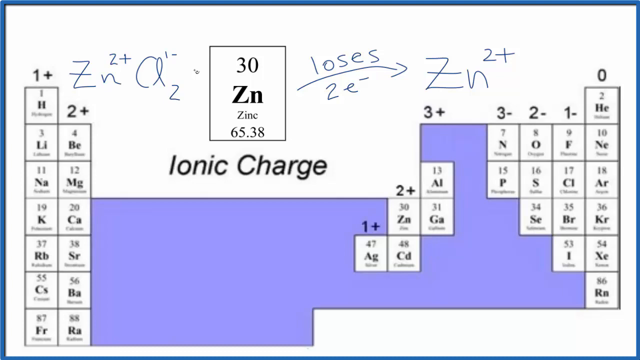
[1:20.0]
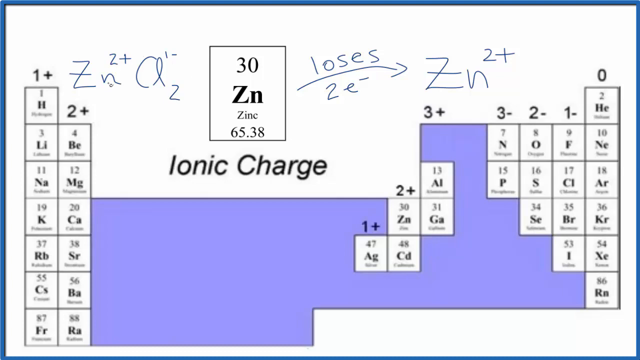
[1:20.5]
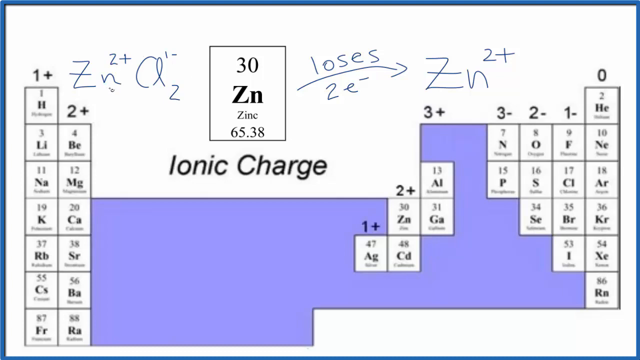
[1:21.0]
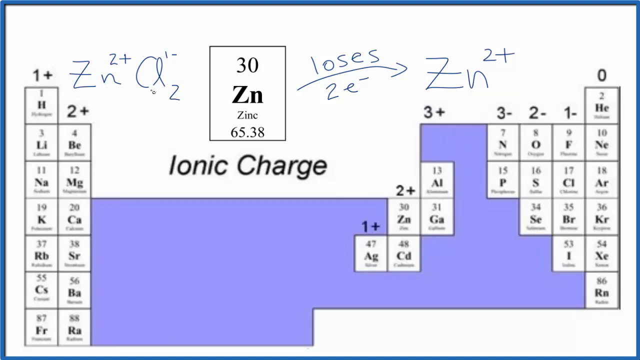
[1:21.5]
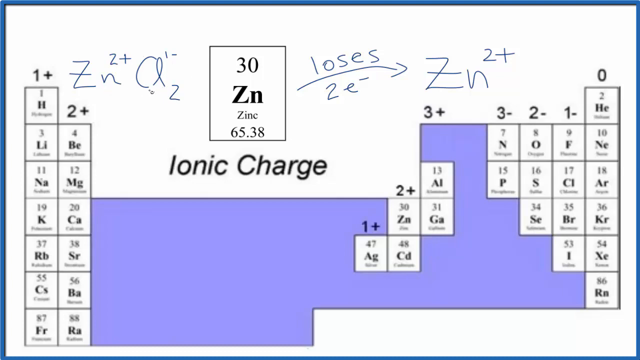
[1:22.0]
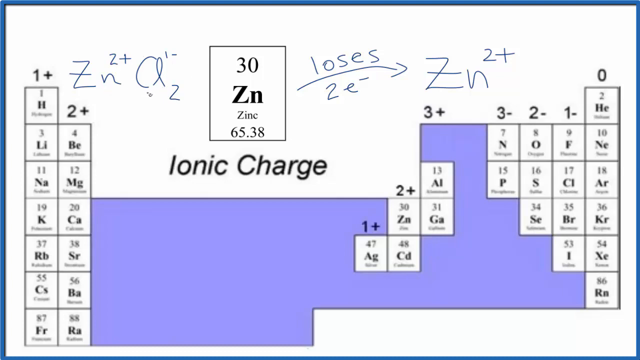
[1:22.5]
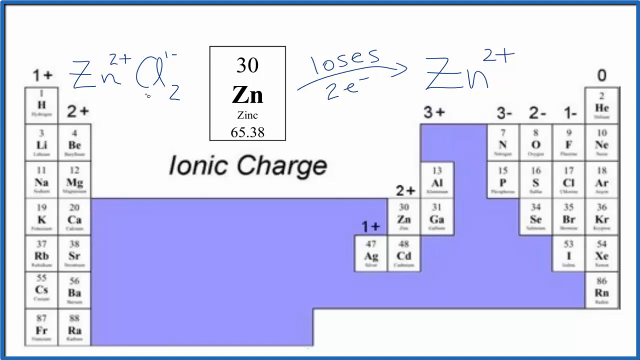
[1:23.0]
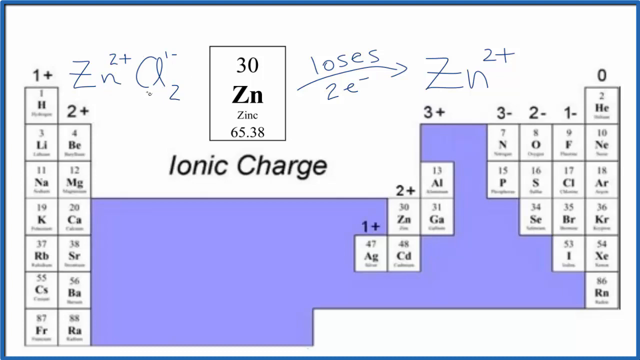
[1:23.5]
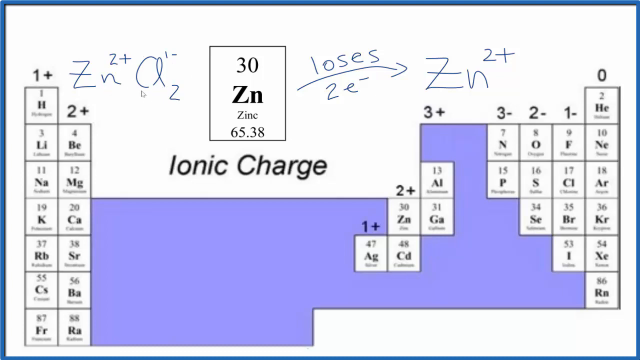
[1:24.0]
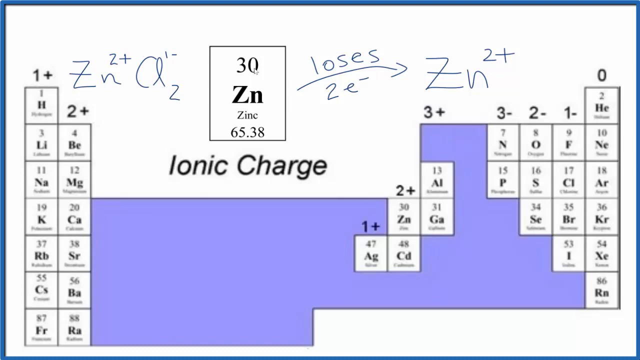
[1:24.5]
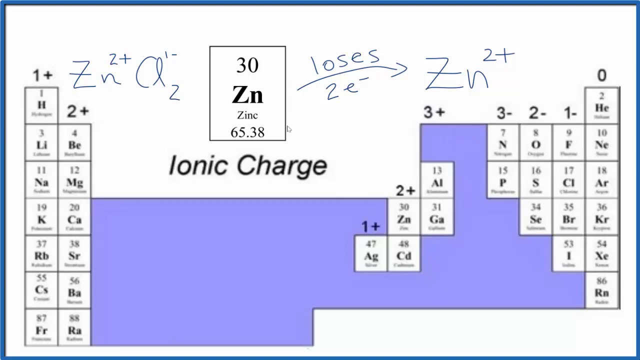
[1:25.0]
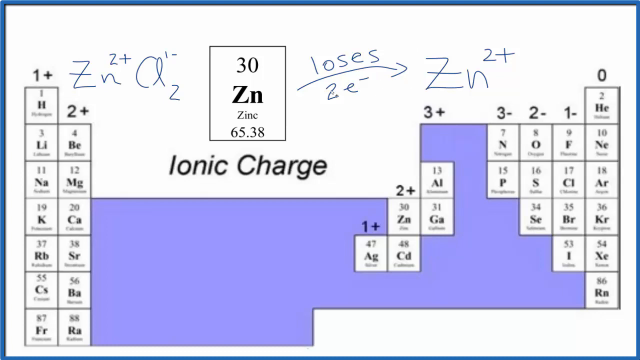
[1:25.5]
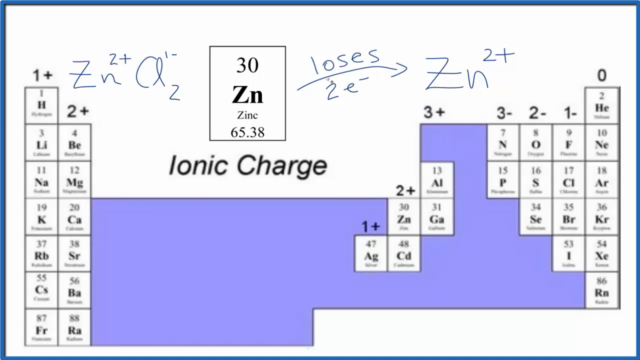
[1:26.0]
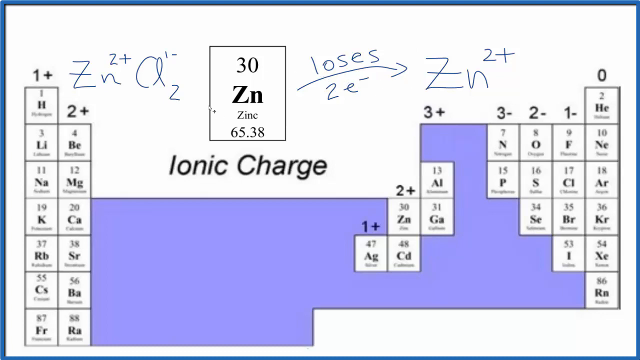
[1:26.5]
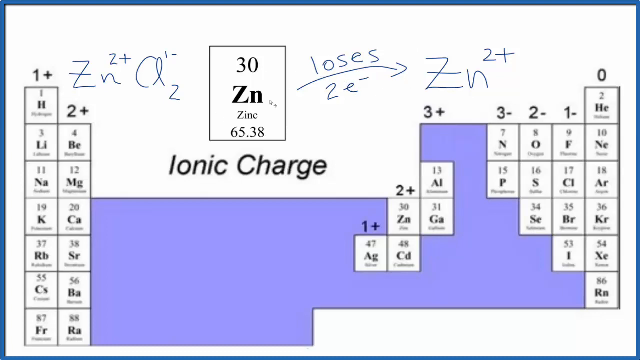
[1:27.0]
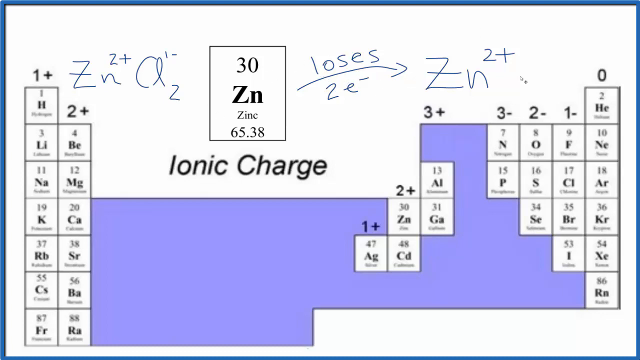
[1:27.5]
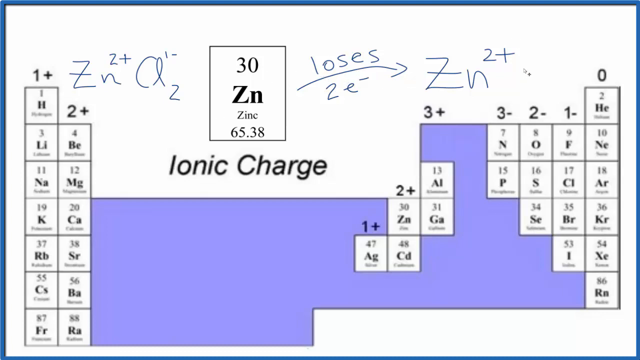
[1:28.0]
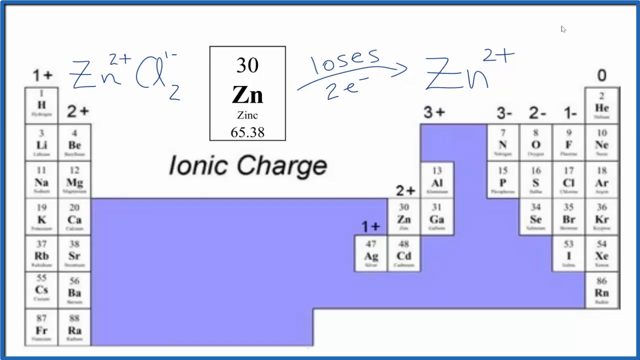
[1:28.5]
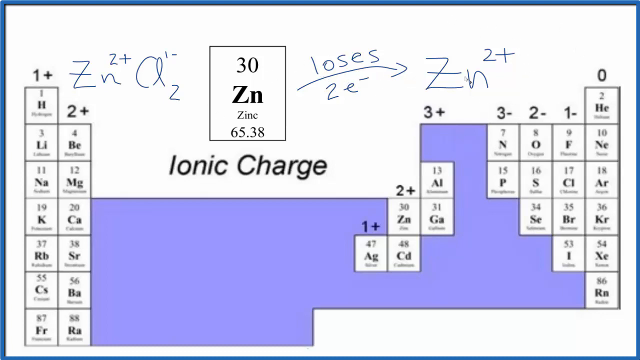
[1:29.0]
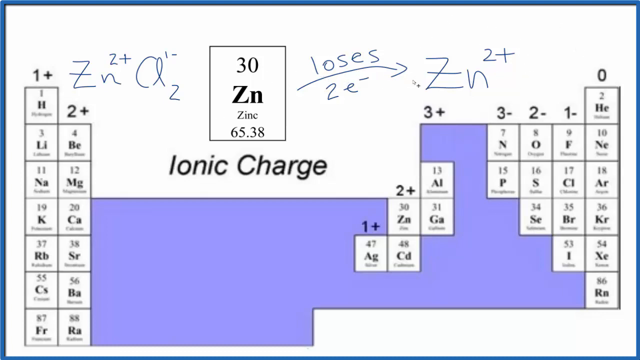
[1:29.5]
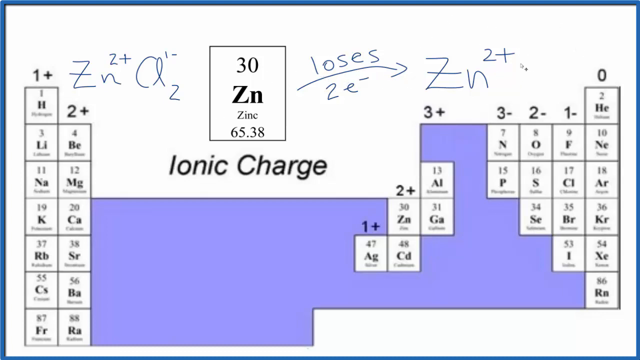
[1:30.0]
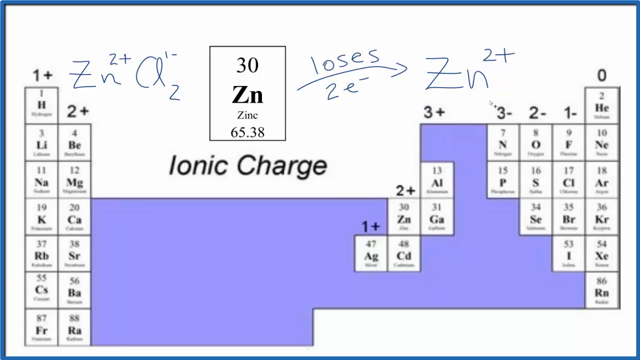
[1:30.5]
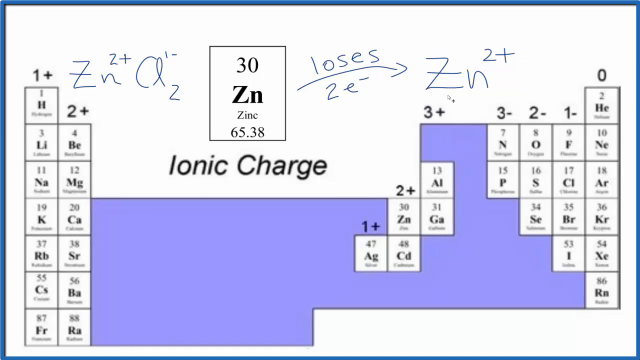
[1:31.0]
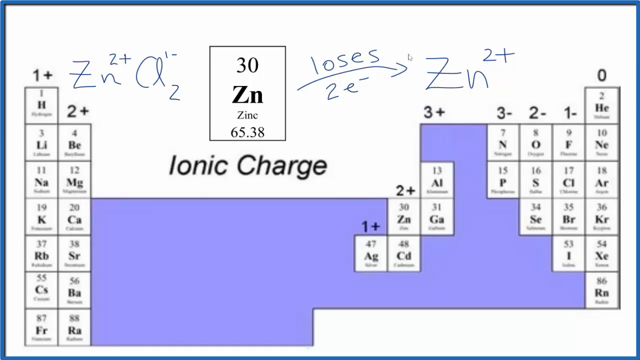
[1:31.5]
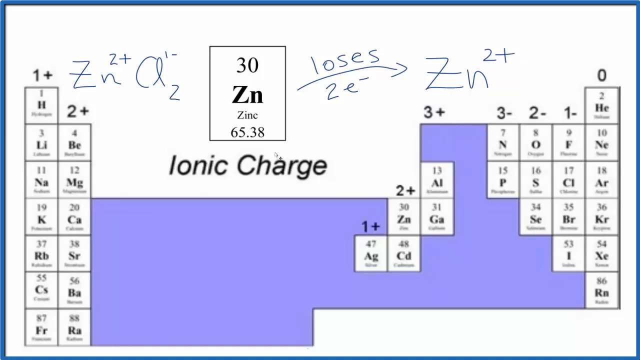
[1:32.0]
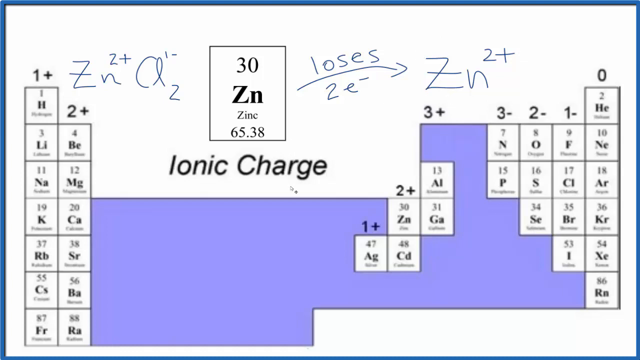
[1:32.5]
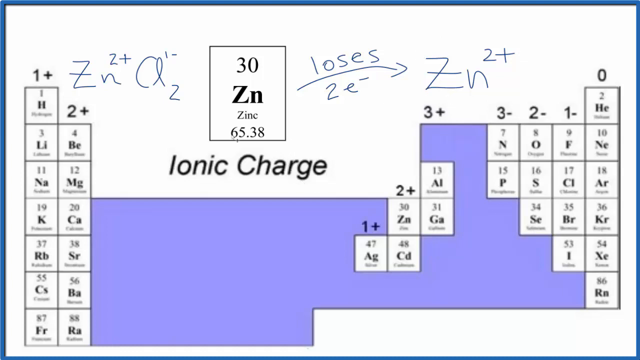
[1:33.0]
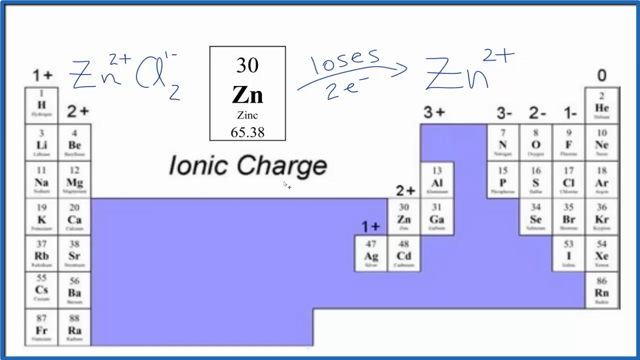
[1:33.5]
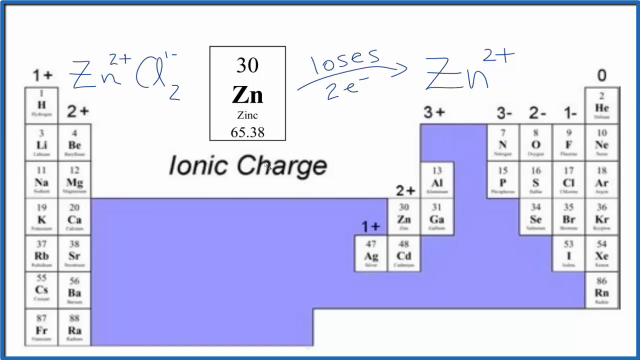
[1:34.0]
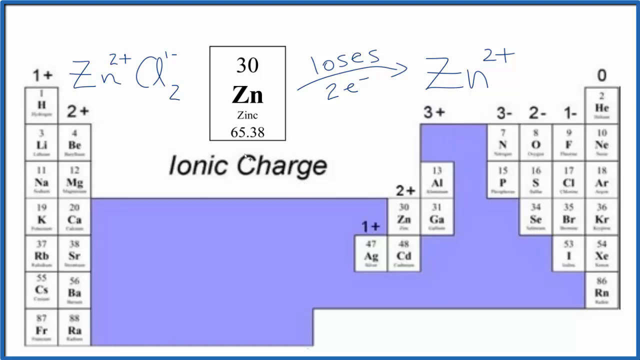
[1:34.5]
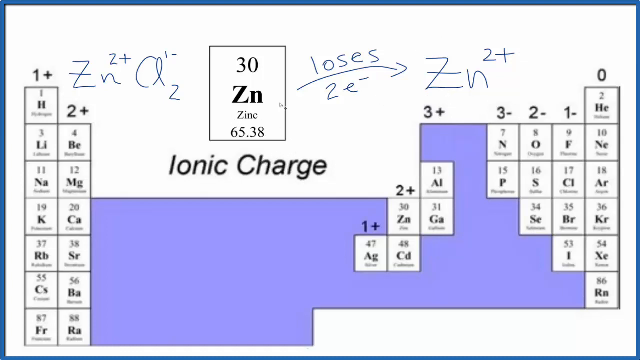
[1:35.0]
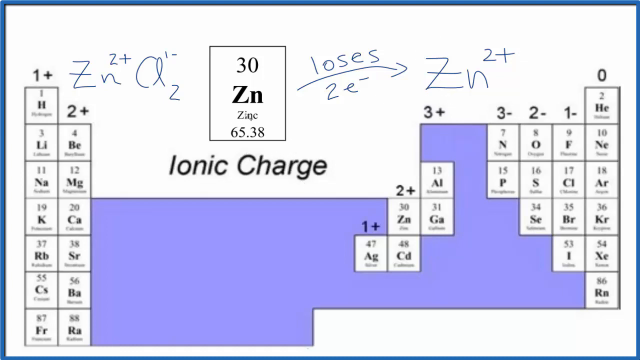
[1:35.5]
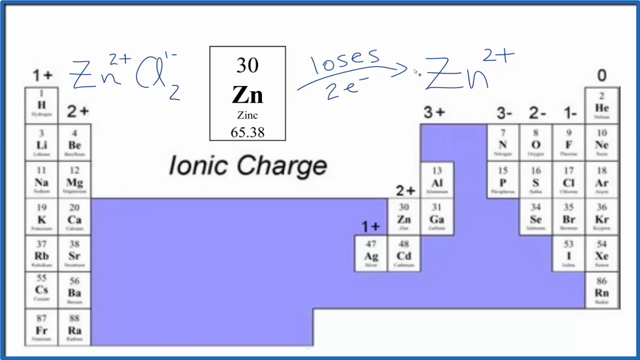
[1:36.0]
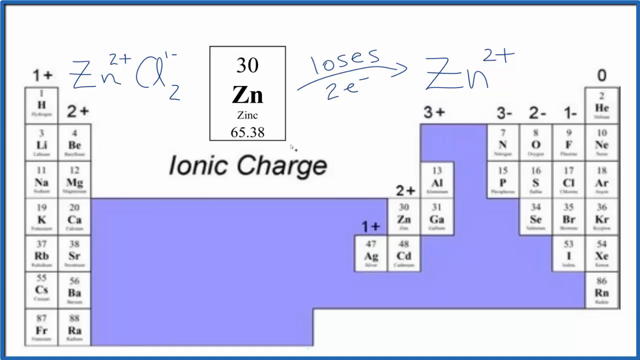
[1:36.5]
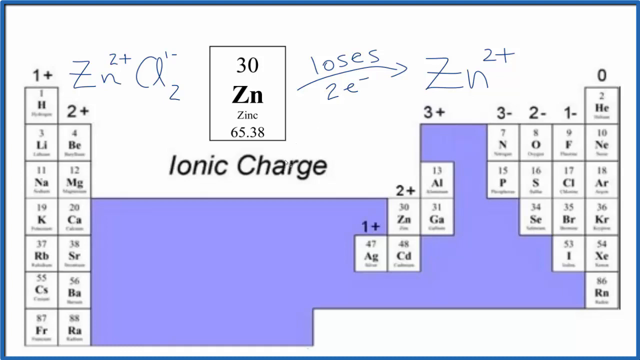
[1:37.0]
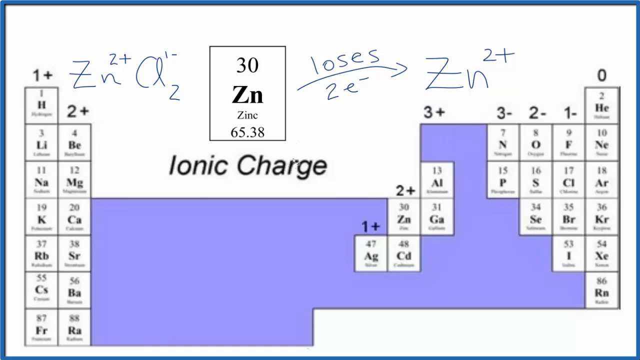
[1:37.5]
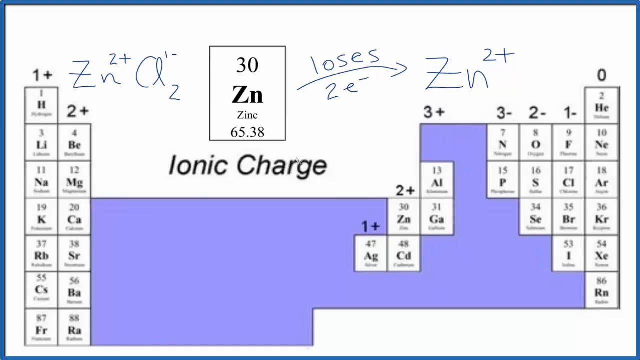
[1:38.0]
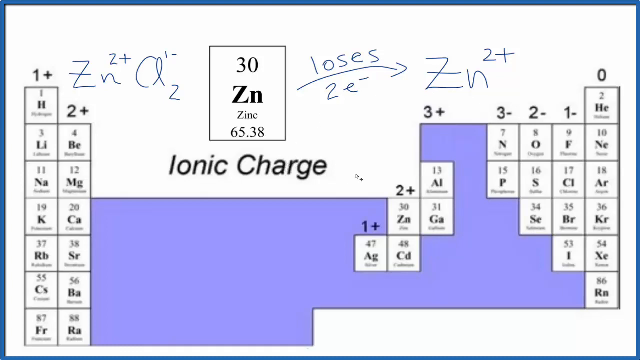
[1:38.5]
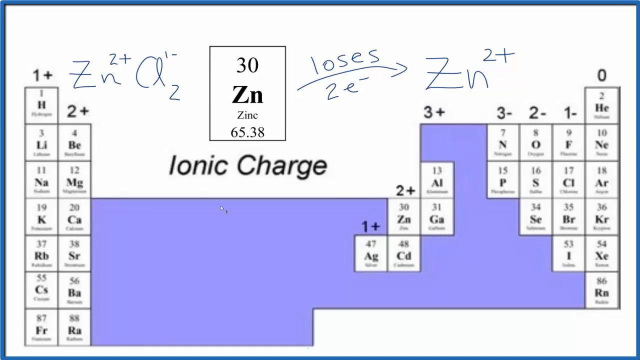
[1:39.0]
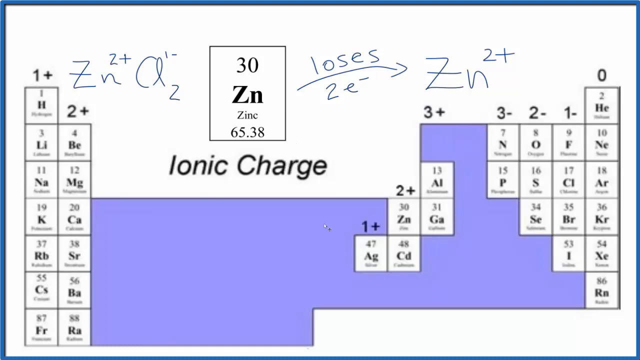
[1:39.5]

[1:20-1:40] The cursor keeps hovering over the handwritten words on the right that say "Losses", with the curved arrow and "2E" underneath. It then moves over to the box originally shown in a larger font, "30ZN Zinc 65.38", and then to the handwritten "ZN2+" on the far right, moving upward and downward around this area several times. It goes down to the "Losses" arrow and then over to the words "Ionic Charge". Next the cursor moves to the writing in the far top left corner of the screen, "ZN2+ A1/2", hovering over these words several times. No more ink is written at this stage. The cursor ends up staying between the original handwritten words on the left and the large-font original box.